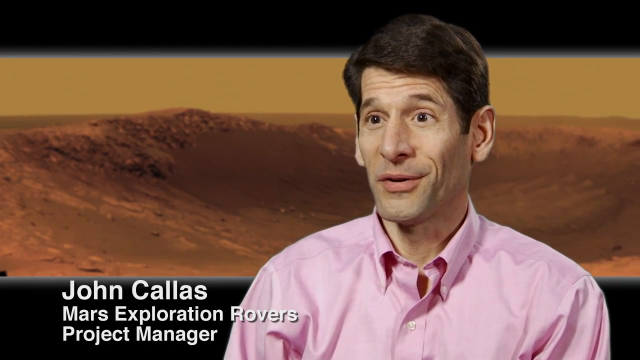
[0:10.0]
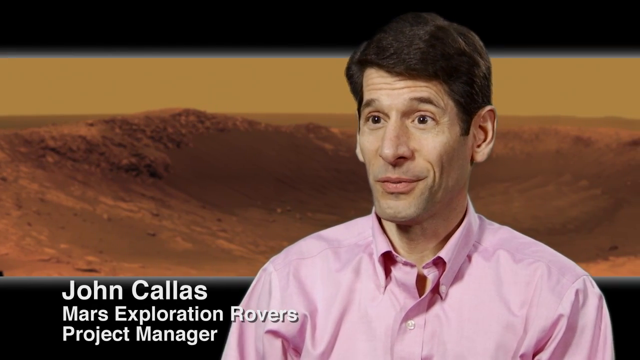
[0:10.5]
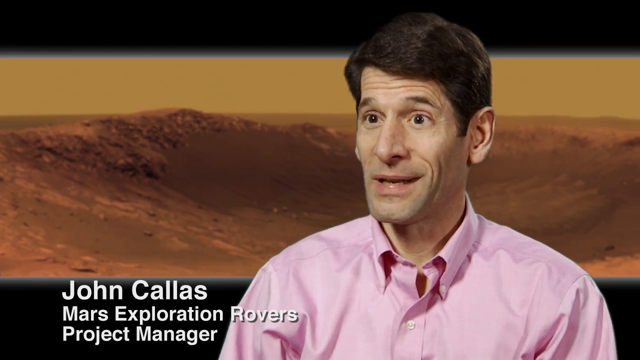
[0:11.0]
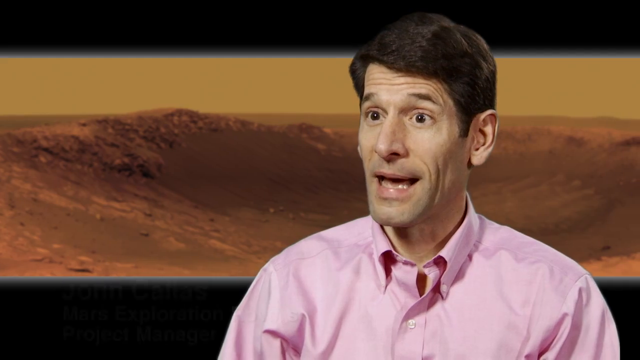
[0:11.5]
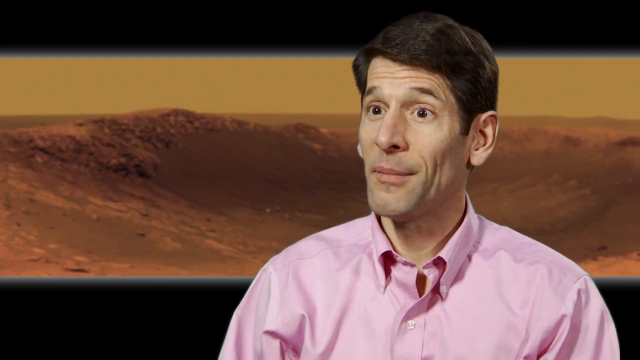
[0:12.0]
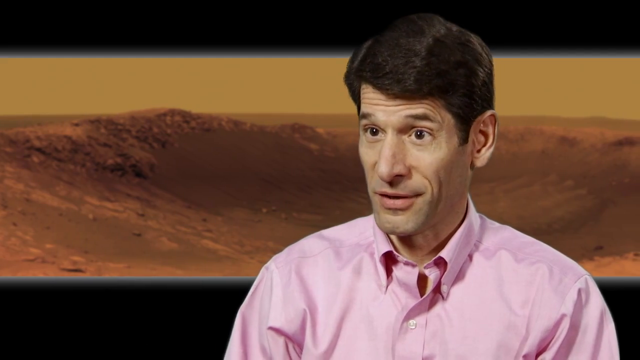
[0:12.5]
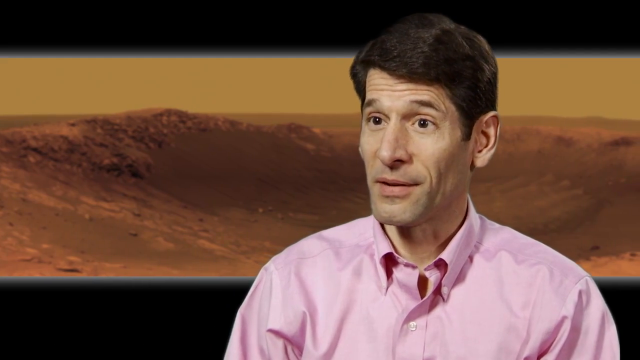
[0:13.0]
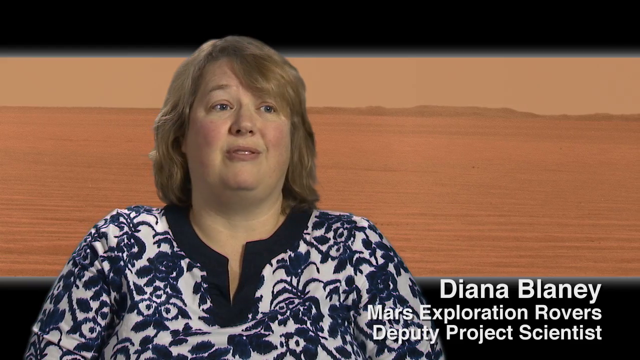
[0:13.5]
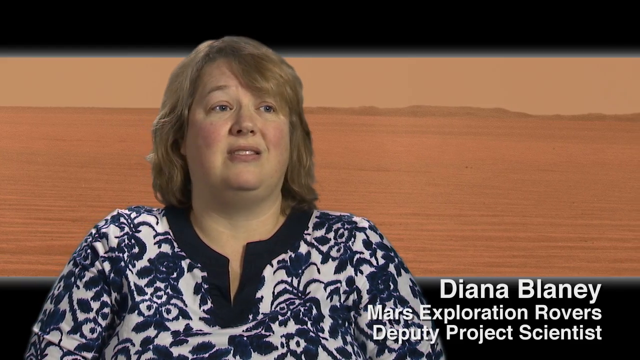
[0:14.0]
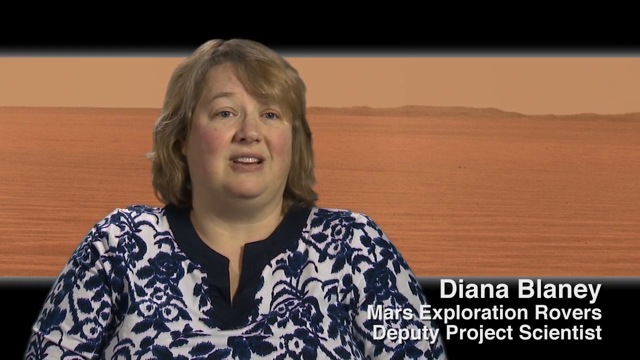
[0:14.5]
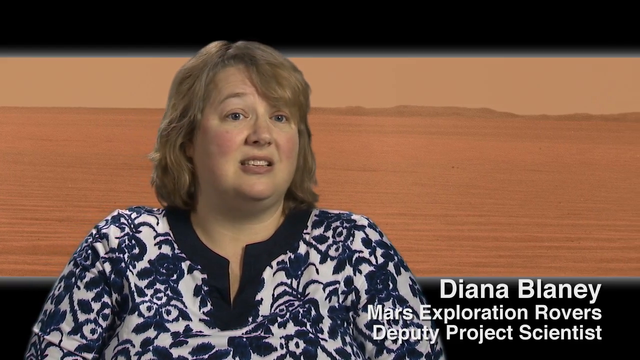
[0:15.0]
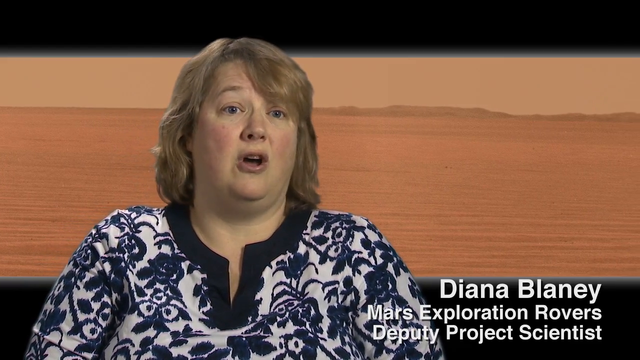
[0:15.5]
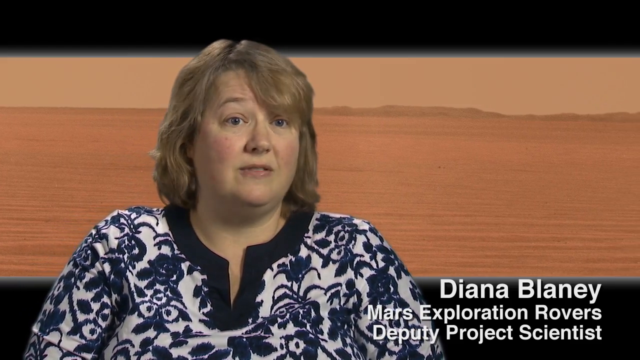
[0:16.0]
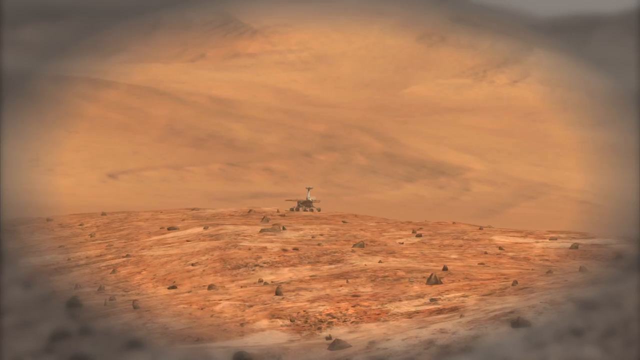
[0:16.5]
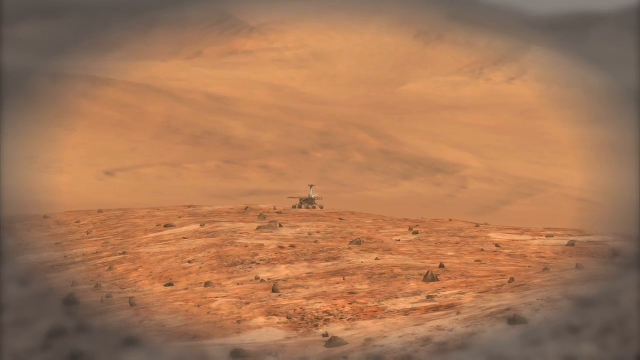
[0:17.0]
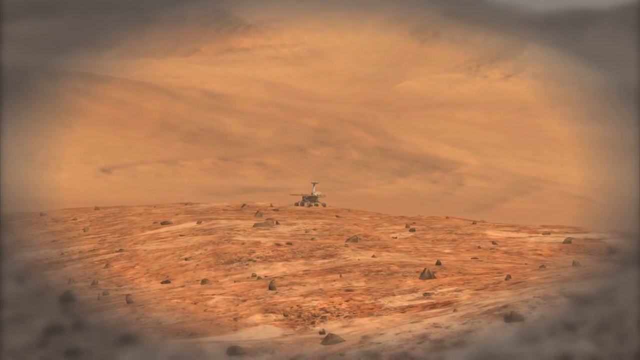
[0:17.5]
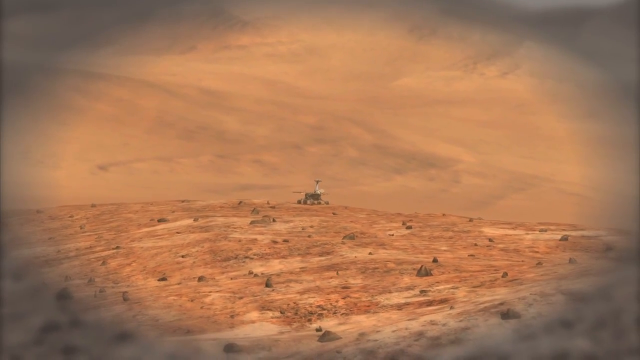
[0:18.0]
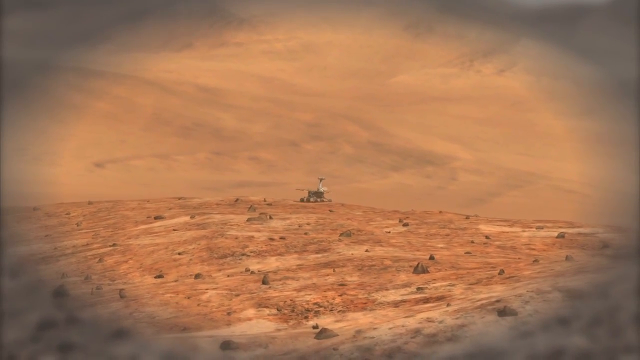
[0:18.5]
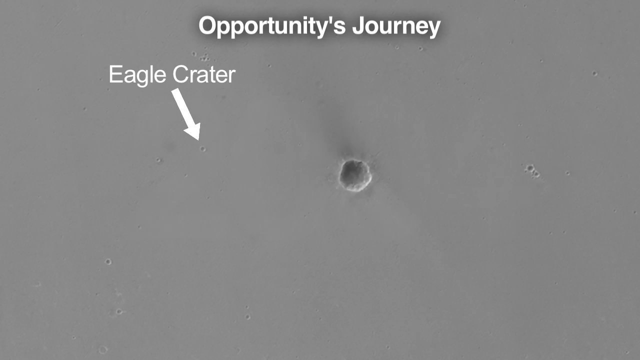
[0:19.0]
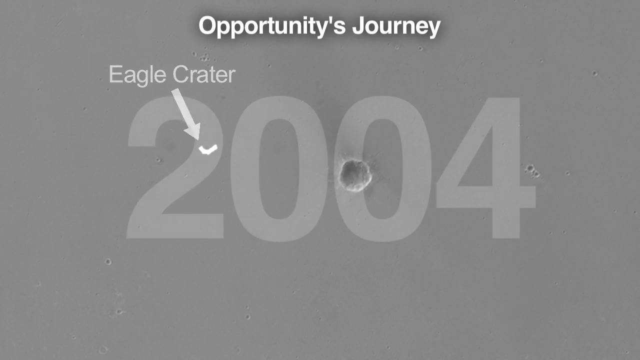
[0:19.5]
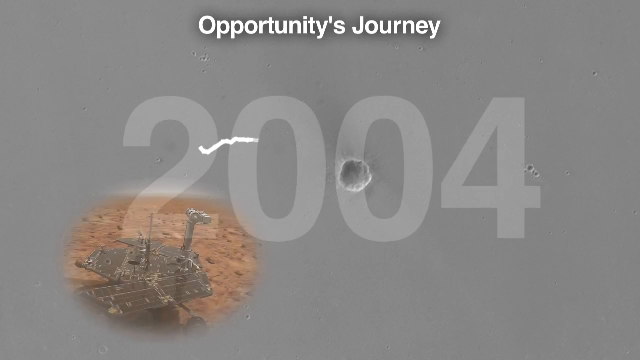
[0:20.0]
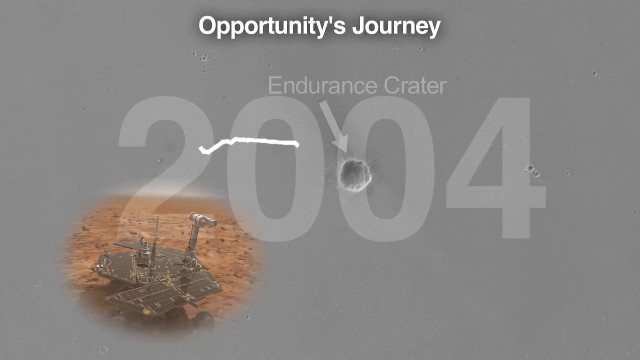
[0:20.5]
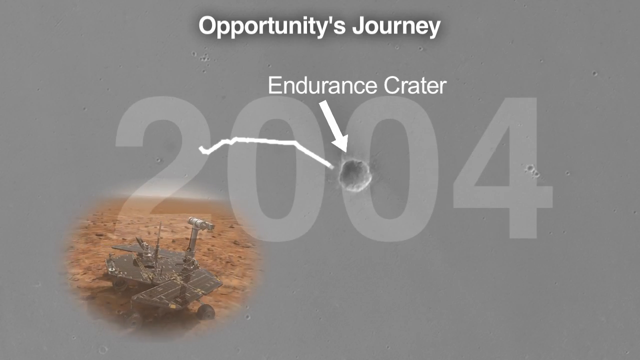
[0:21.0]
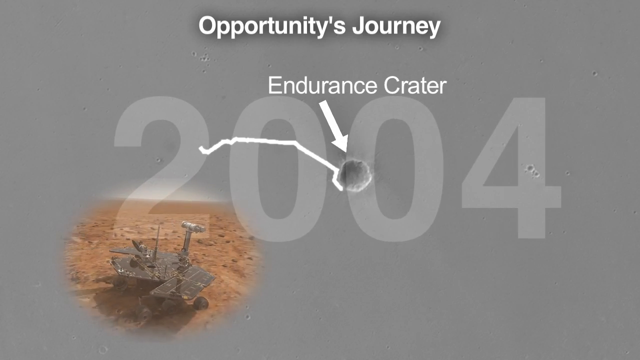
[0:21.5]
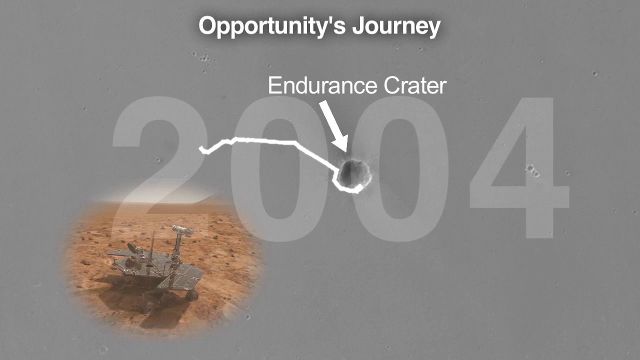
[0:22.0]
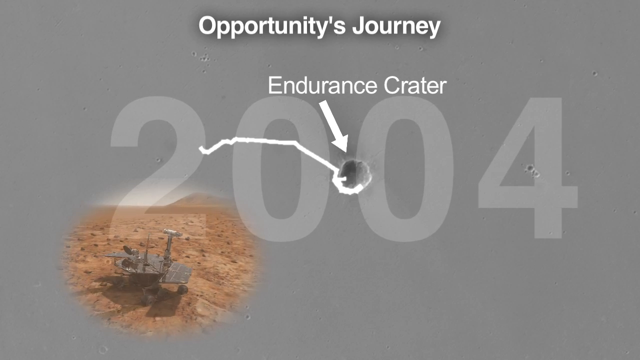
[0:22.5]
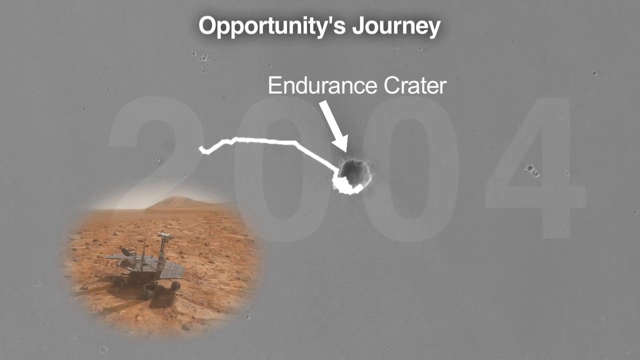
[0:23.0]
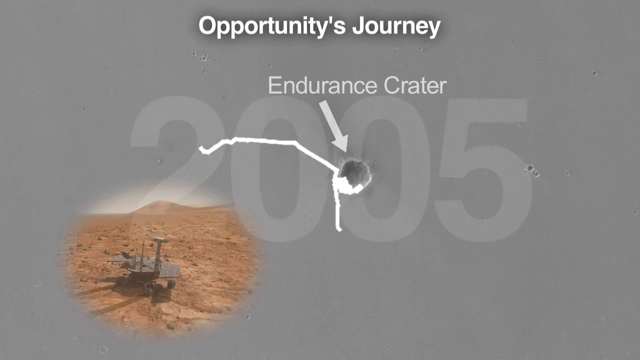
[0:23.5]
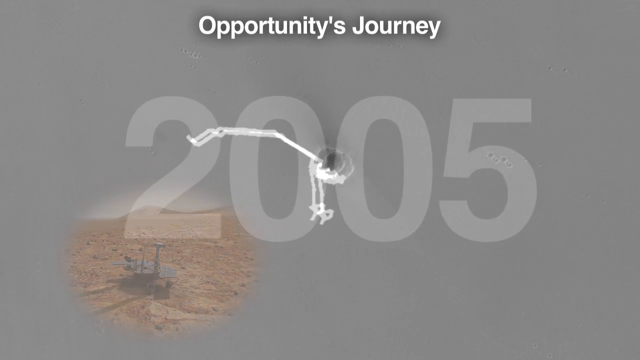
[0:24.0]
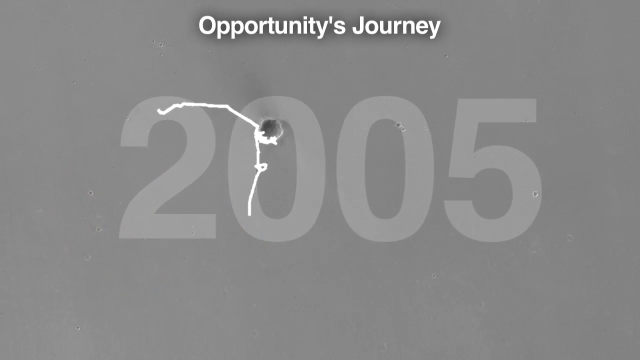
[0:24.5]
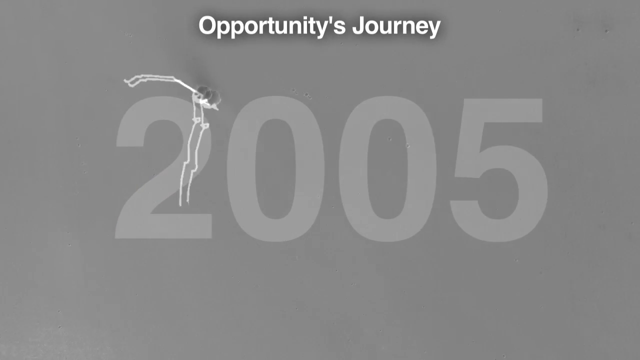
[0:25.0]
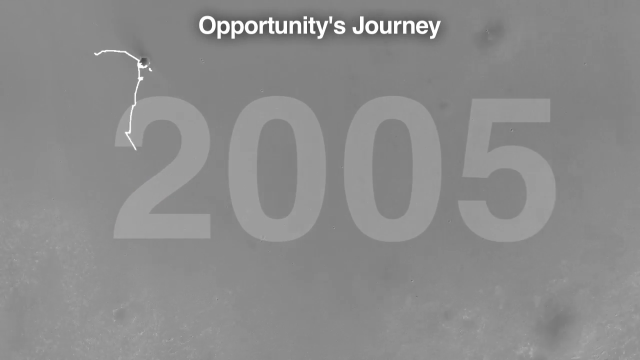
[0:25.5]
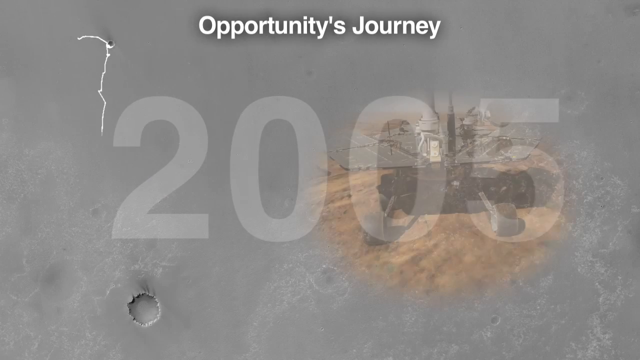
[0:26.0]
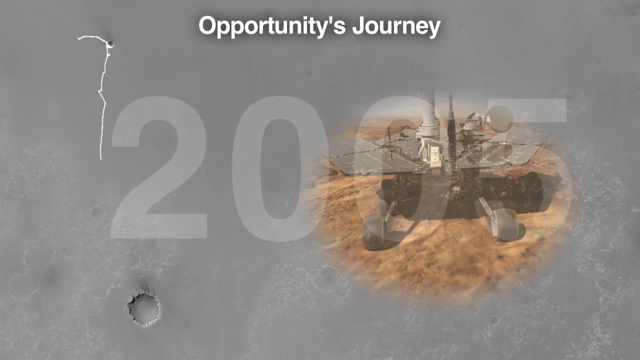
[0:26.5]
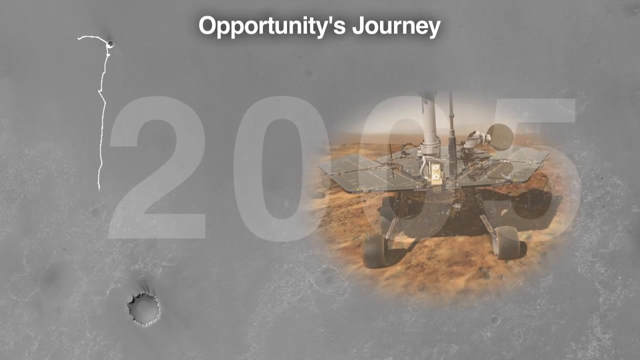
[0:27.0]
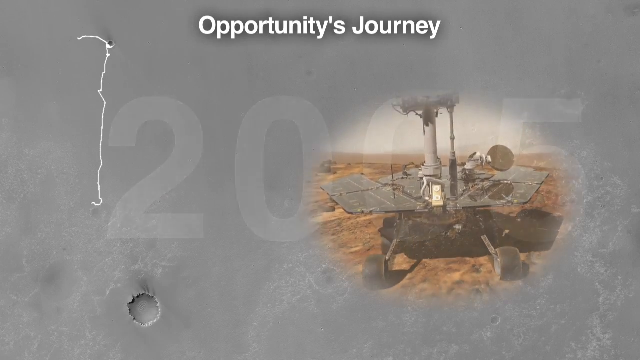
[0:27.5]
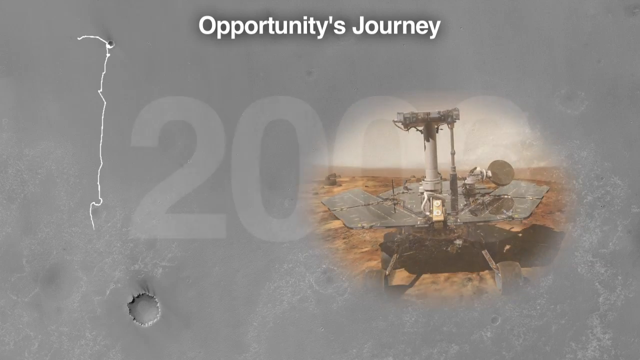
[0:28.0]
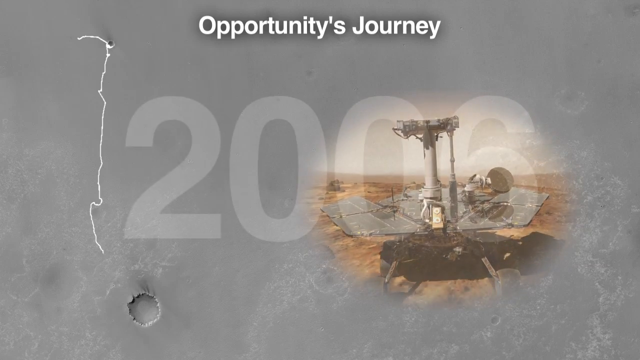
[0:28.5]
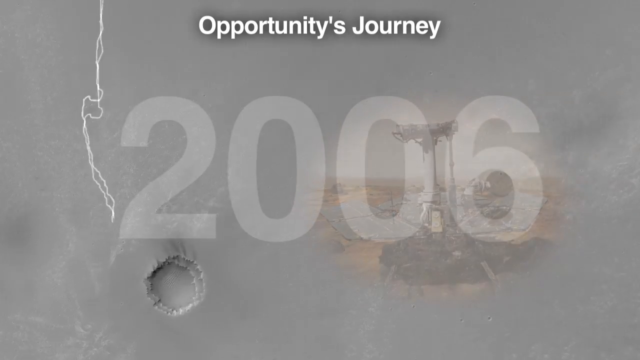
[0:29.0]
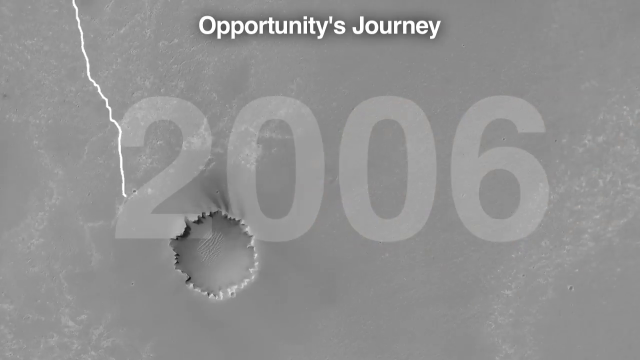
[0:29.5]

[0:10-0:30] John Callas speaks again, positioned on the right-hand side of the frame. He wears a pink collared shirt, has dark hair, and looks not directly at the camera but slightly to the left. Behind him is brown dirt, so it looks like possibly a deserted planet. He keeps speaking, nodding his head up and down. The video then changes to a woman on the left-hand side of the screen. She is white, with blonde hair that goes down to about shoulder length, and wears a blue and white blouse; she speaks while looking slightly to the right of the camera. Next comes a desolate area with some kind of mechanical device in the background that cannot be made out clearly, moving slowly towards the right. Then the top center reads "Opportunity's journey" and "2005" appears across the center of the screen, while a photo pops up on the right-hand side showing a mechanical device, possibly a drone of some sort. The camera slowly moves up and then zooms in on what looks to be potentially the moon or a similar planet.